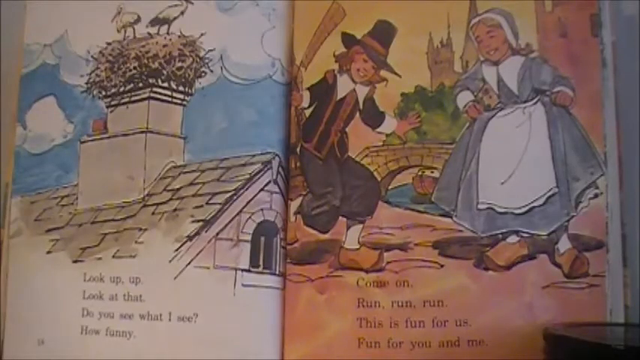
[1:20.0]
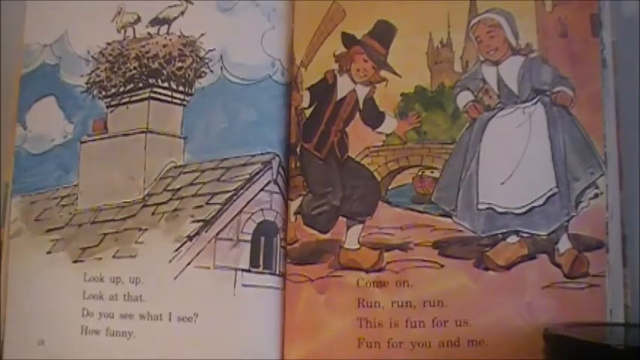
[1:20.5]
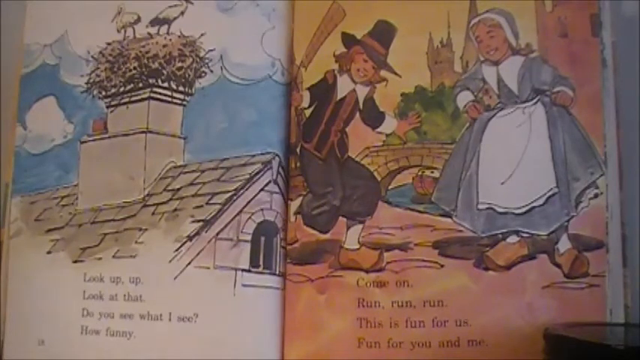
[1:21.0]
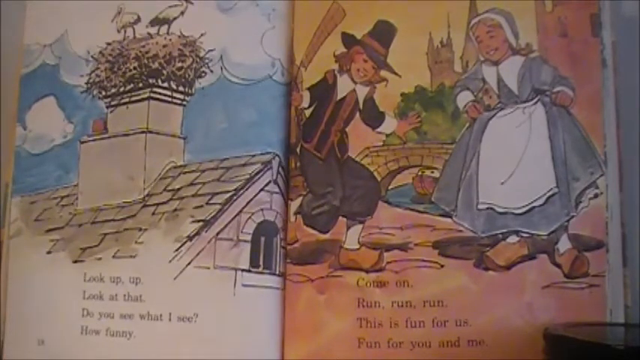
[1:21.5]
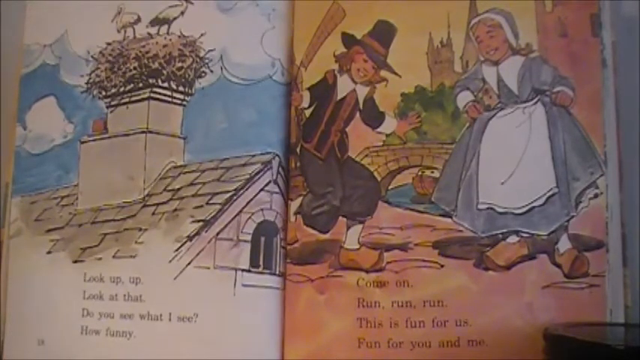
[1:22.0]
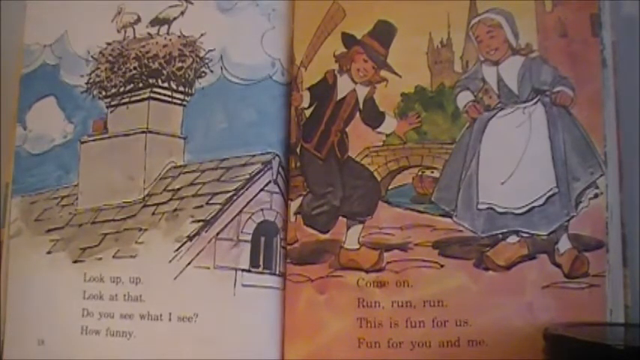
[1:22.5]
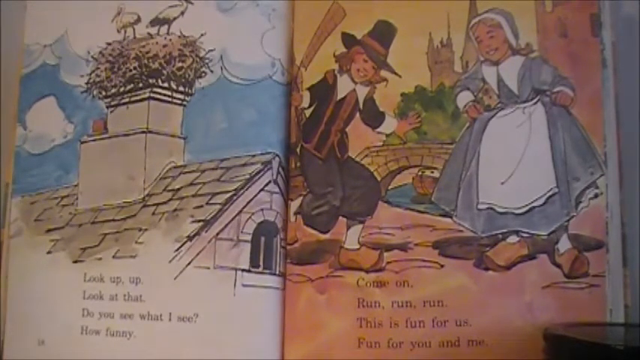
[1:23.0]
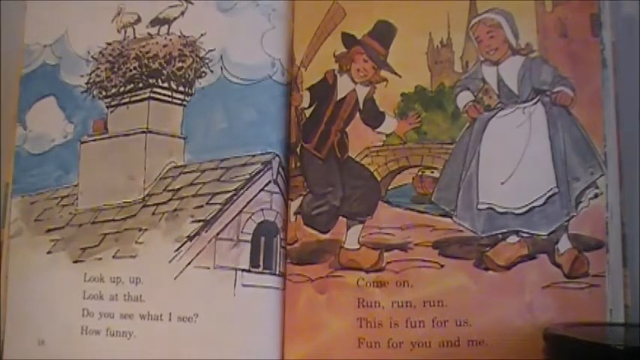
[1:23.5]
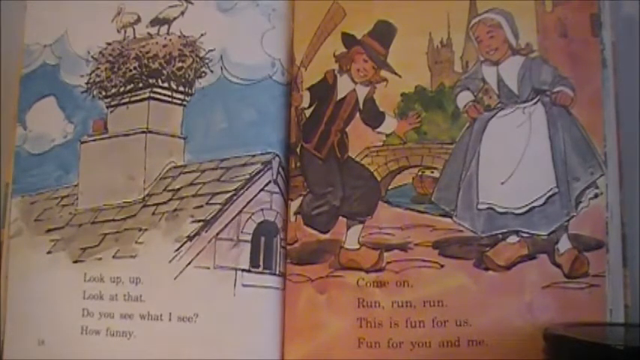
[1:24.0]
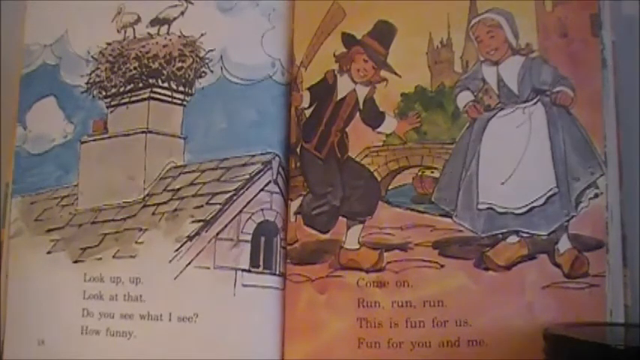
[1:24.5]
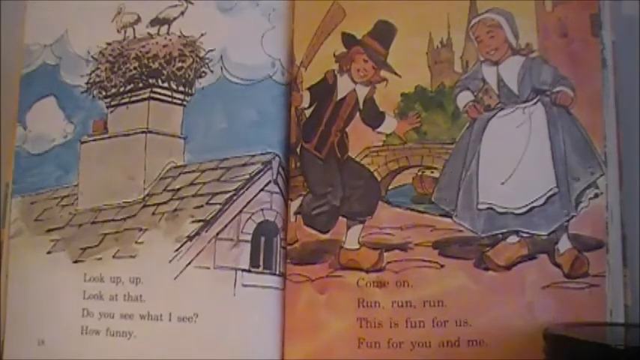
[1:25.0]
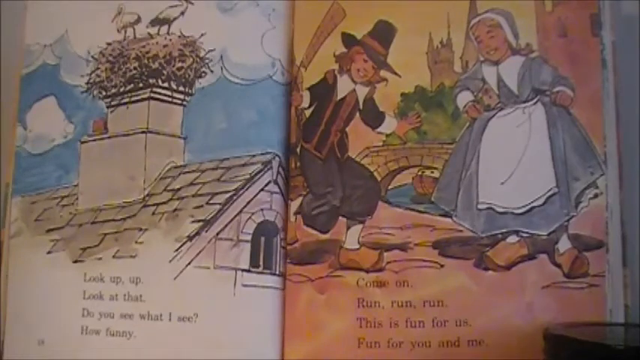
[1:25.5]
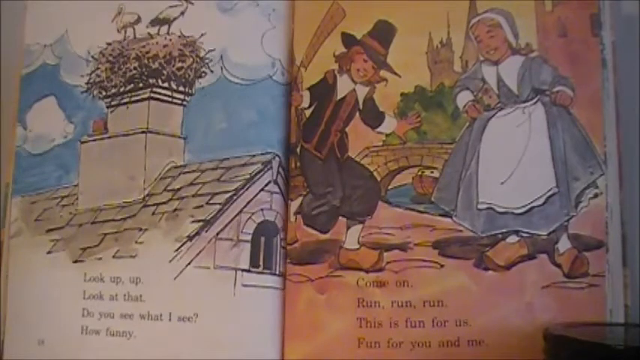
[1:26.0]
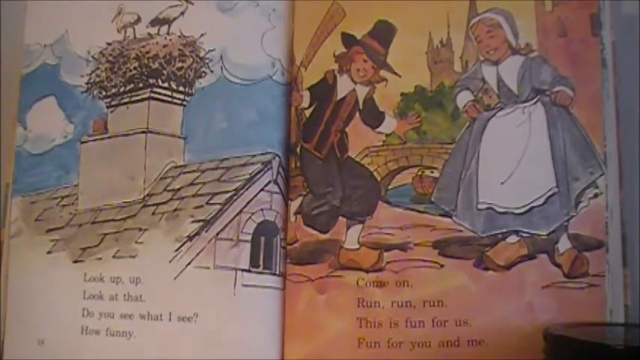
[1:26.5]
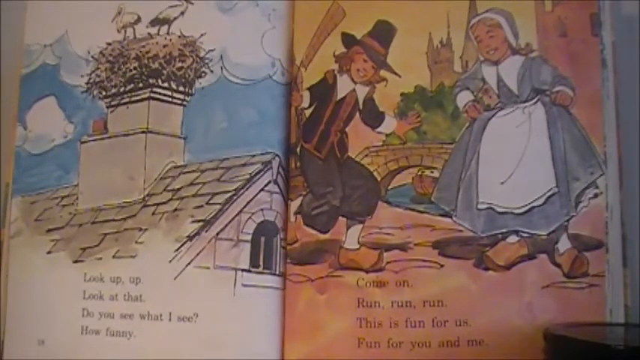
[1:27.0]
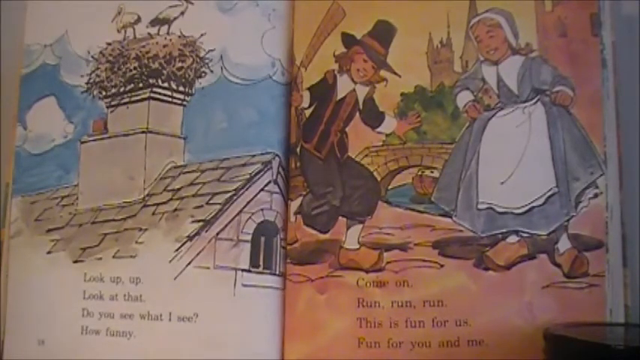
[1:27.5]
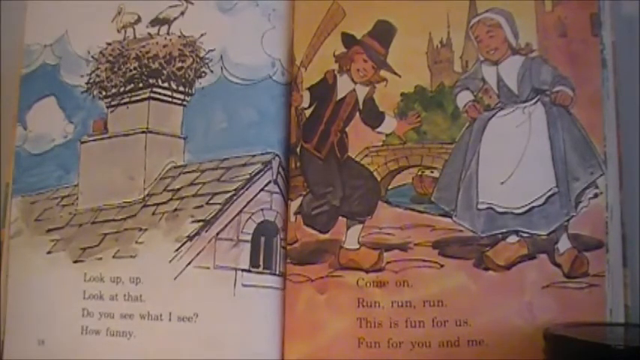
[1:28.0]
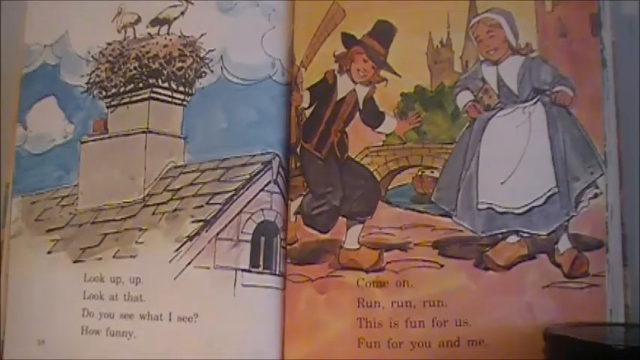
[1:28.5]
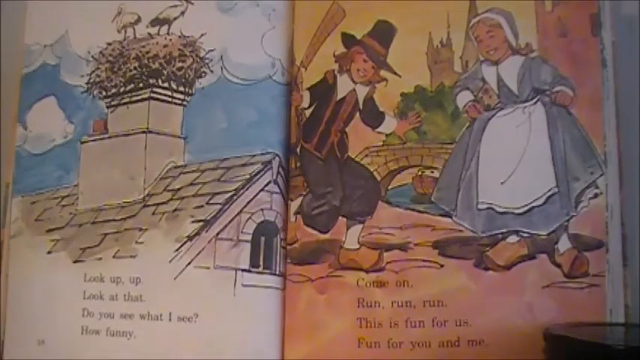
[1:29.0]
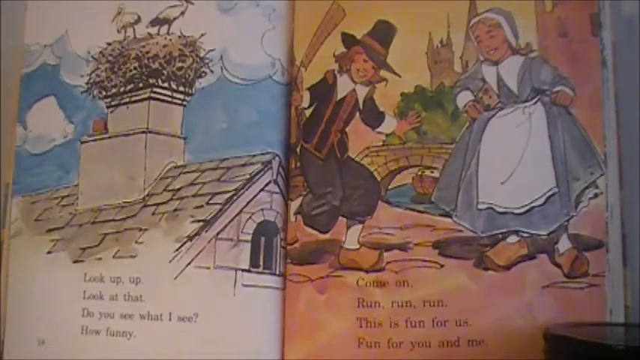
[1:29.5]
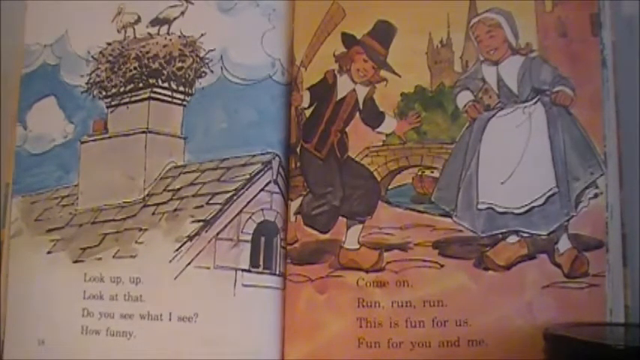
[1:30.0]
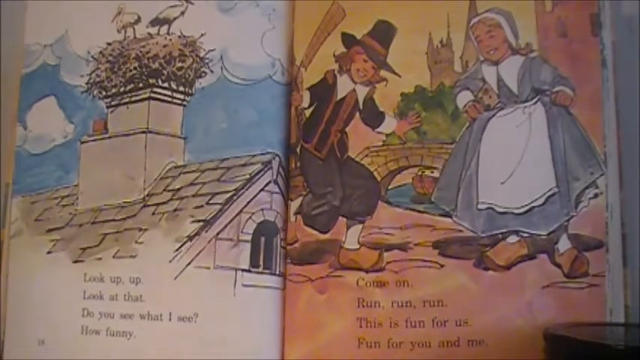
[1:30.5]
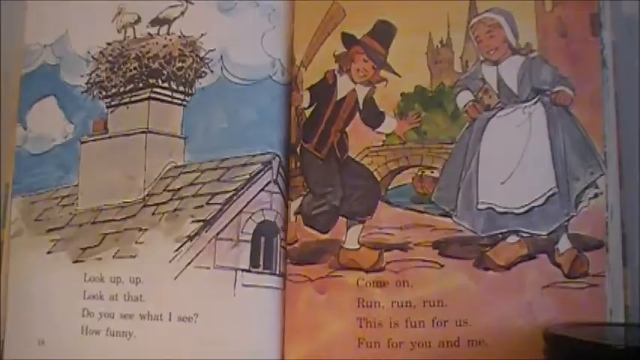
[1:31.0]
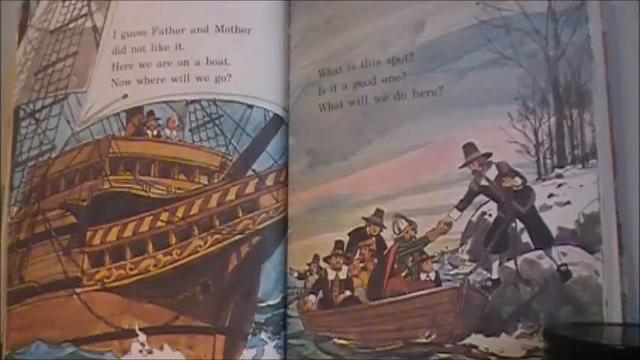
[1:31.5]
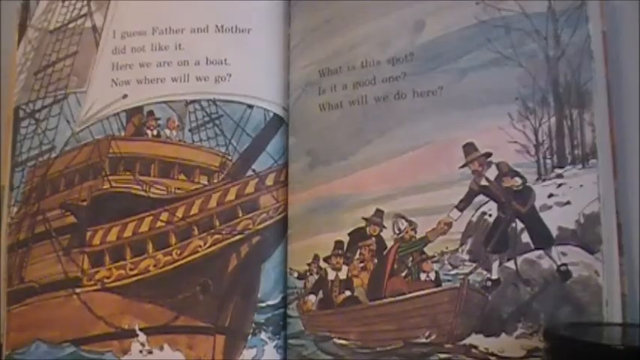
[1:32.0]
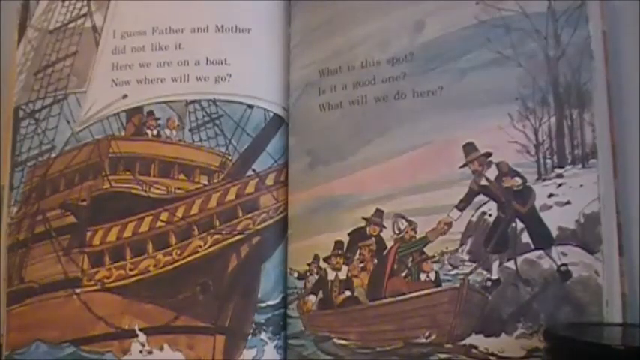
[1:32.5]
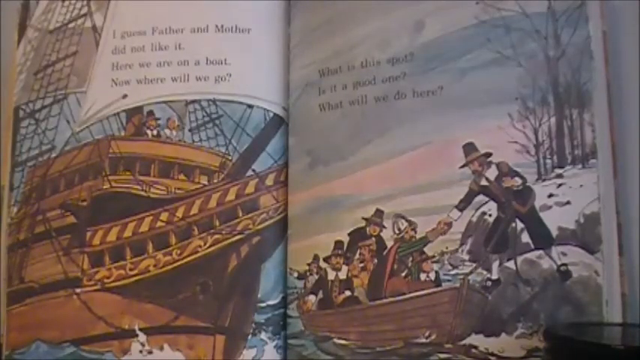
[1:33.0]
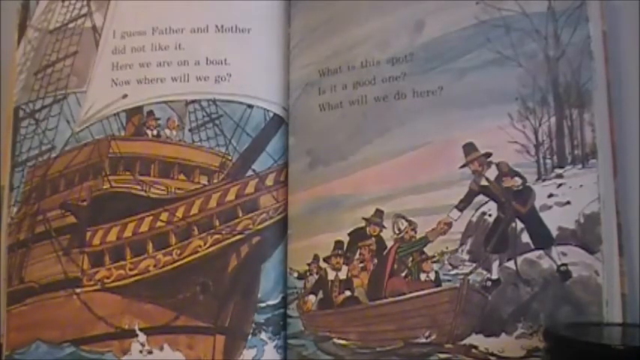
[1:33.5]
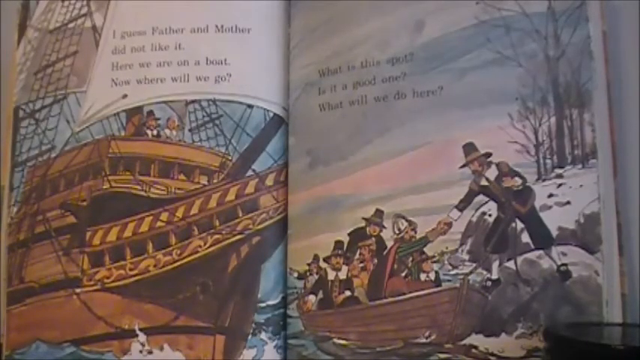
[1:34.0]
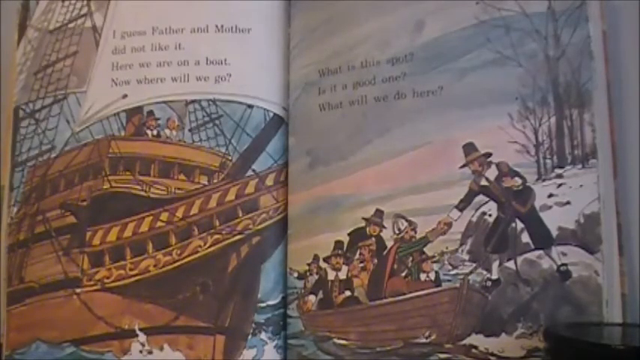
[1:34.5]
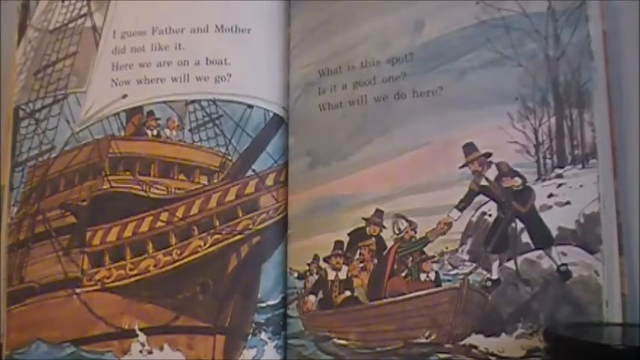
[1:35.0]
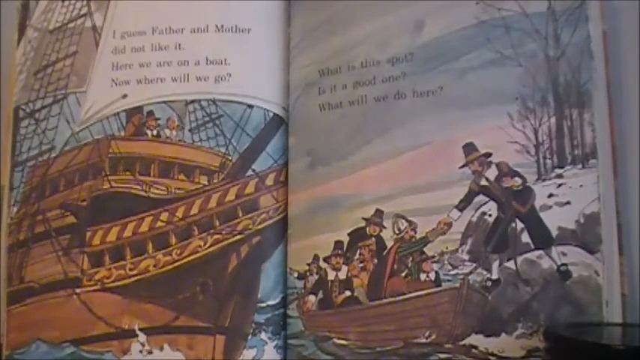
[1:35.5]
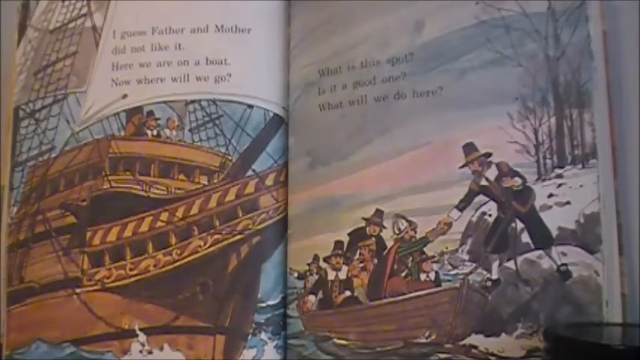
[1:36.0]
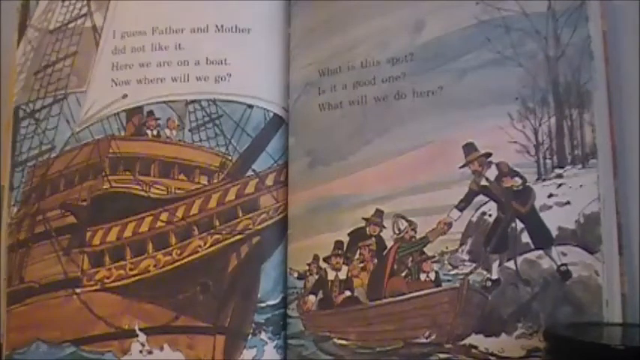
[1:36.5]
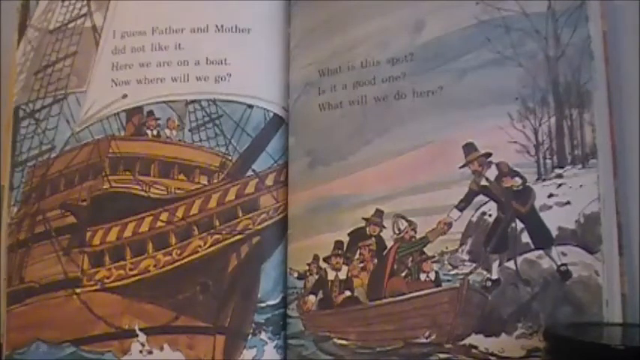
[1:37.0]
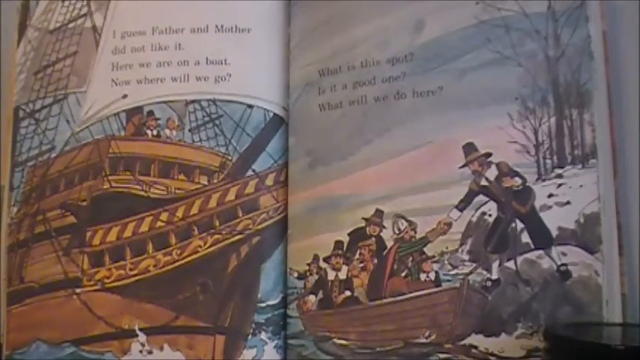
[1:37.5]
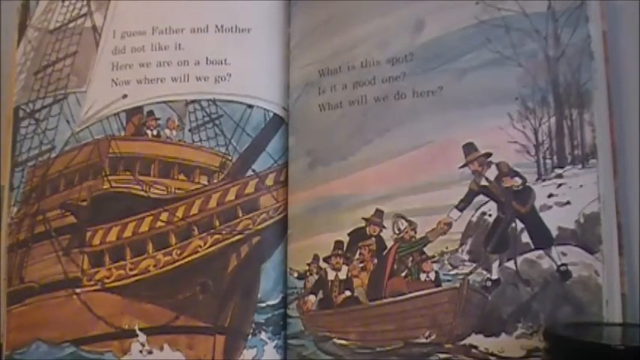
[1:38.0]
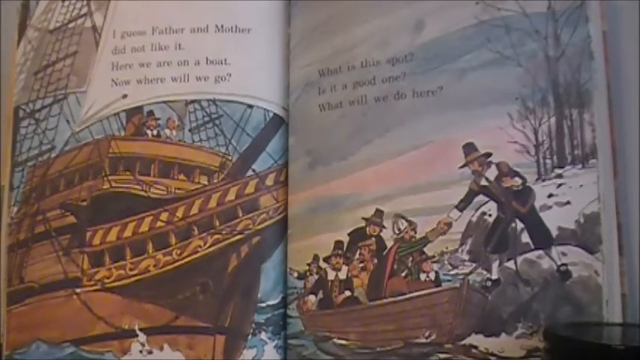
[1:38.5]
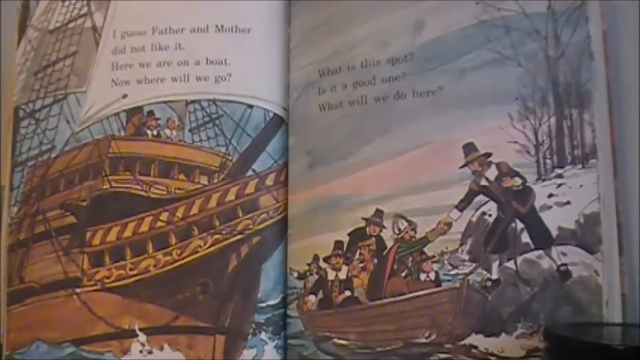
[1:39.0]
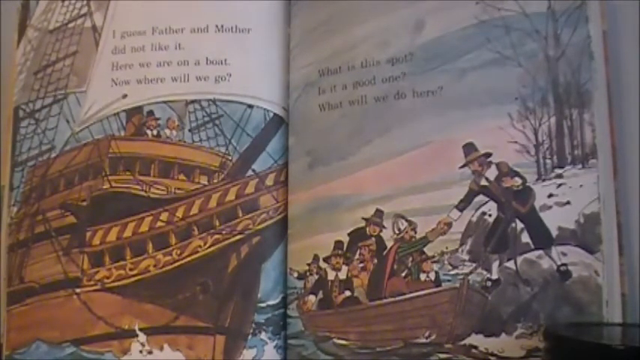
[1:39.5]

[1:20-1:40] The book returns to one illustration per page rather than double-page spreads. The first page shows the roof of a house with a chimney and some birds nesting on top of the chimney. The other page shows the two children from the cover apparently dancing or playing a game outside on what look like cobbled streets. The next page shows a ship that looks even more elaborate than the one they were on, with lots of external rigging and apparently red and gold detailing. The facing page shows what looks like a rowboat full of people, with a pilgrim on shore meeting them, holding up his hand towards the man sitting at the front of the little rowboat. It looks like winter in this picture, with snow and barren trees in the background.